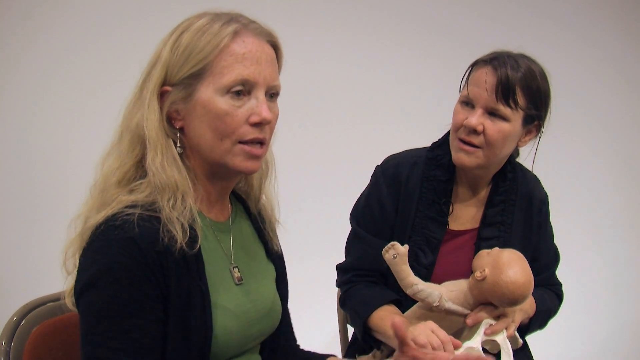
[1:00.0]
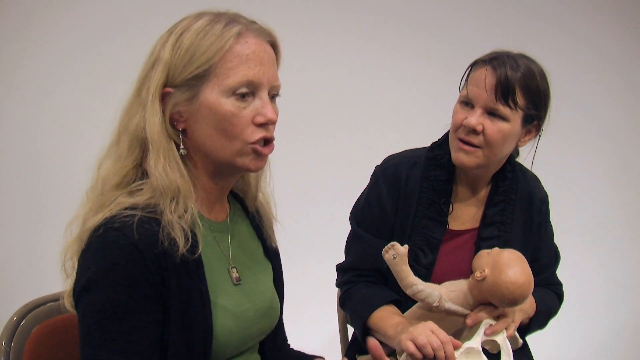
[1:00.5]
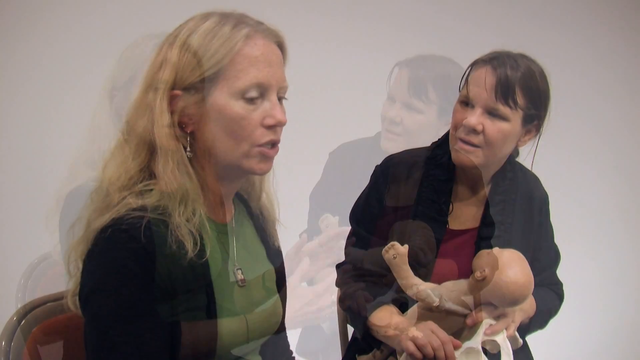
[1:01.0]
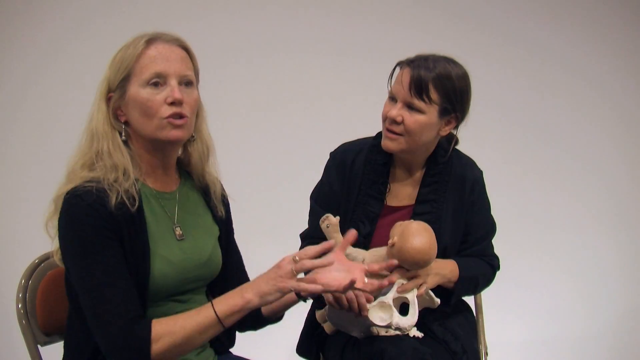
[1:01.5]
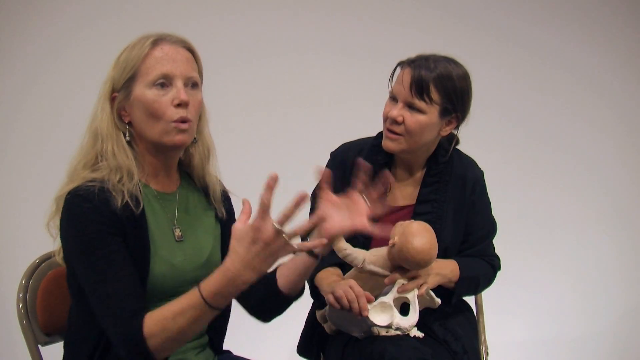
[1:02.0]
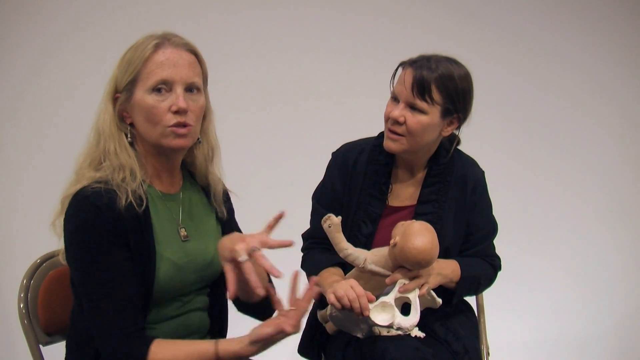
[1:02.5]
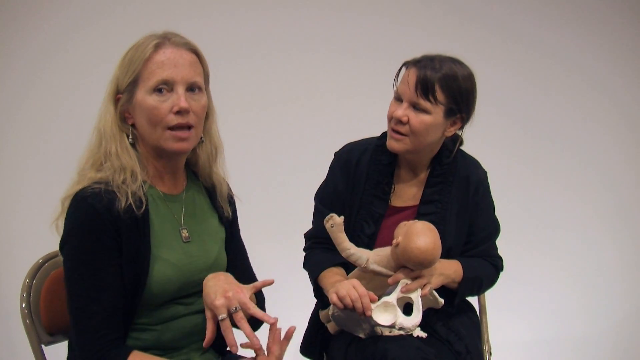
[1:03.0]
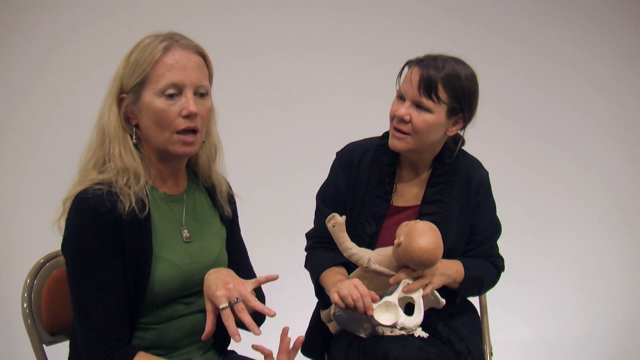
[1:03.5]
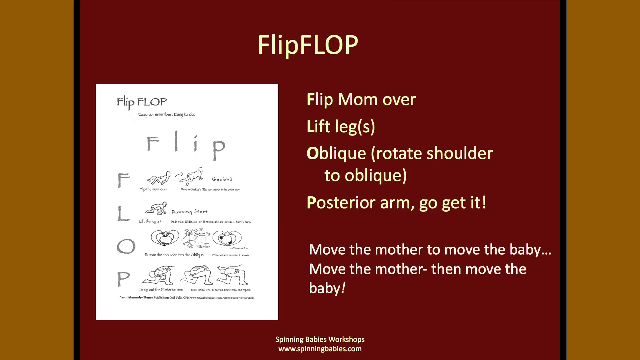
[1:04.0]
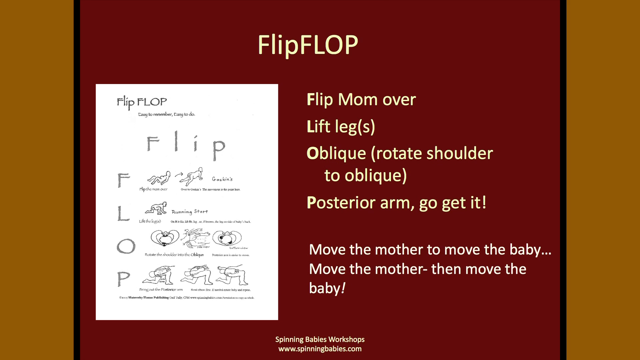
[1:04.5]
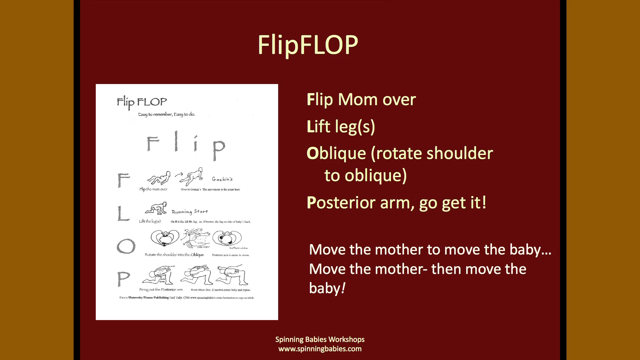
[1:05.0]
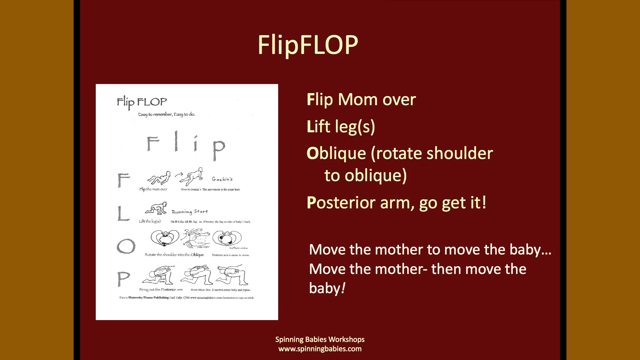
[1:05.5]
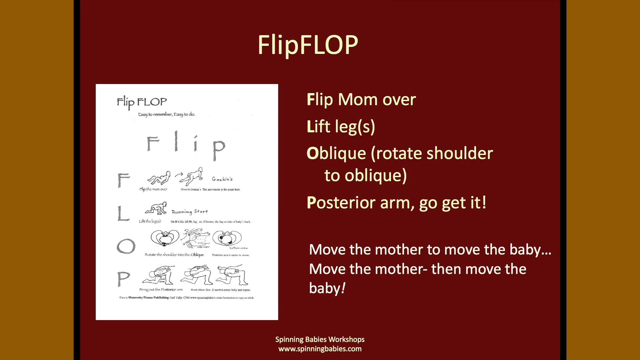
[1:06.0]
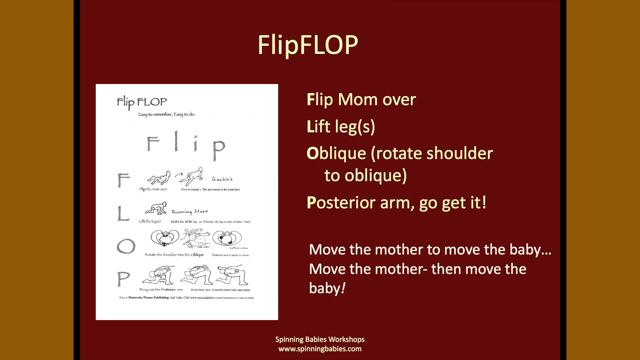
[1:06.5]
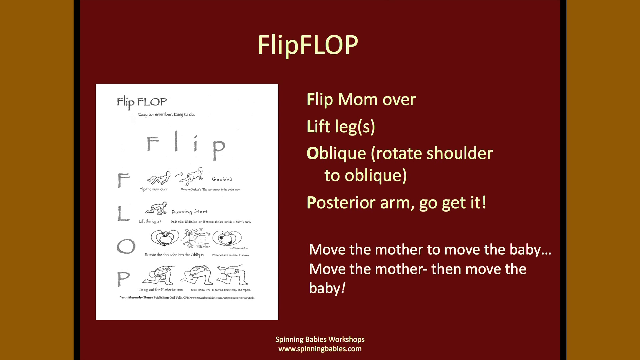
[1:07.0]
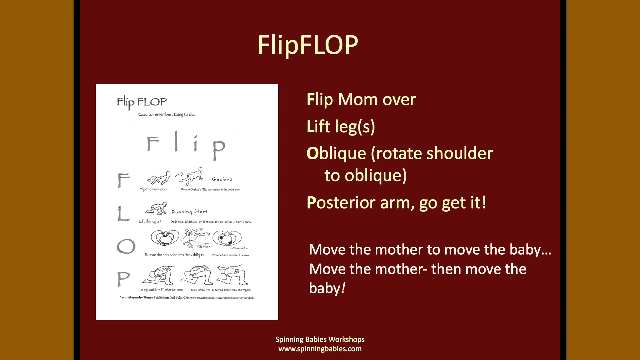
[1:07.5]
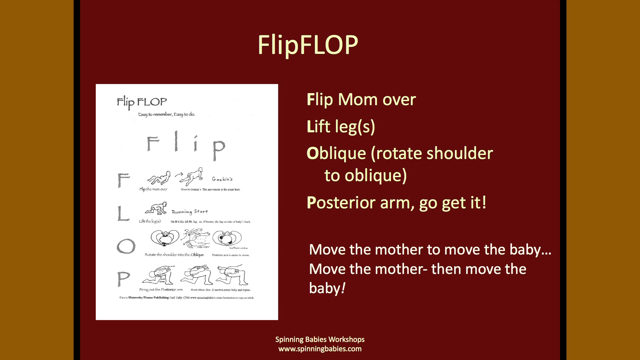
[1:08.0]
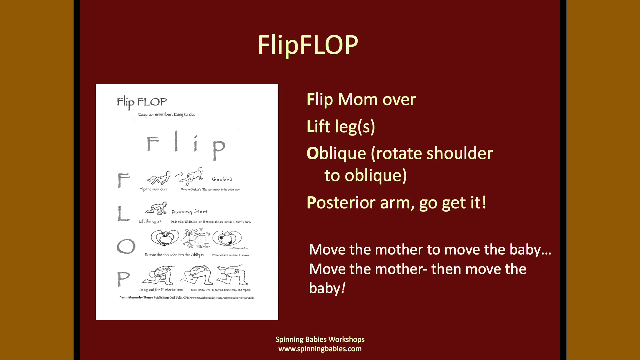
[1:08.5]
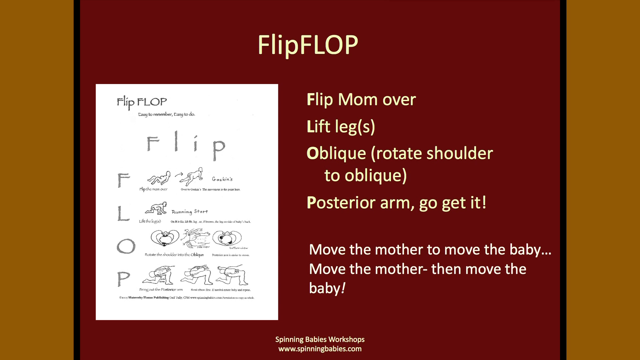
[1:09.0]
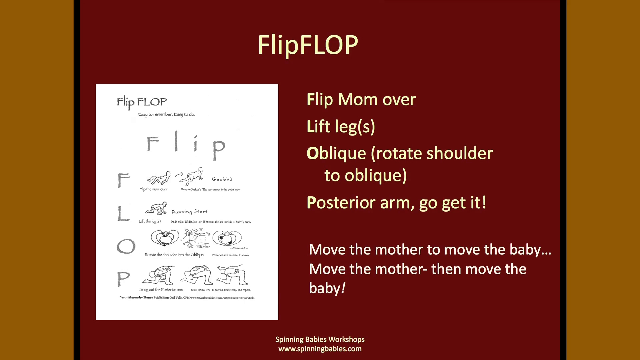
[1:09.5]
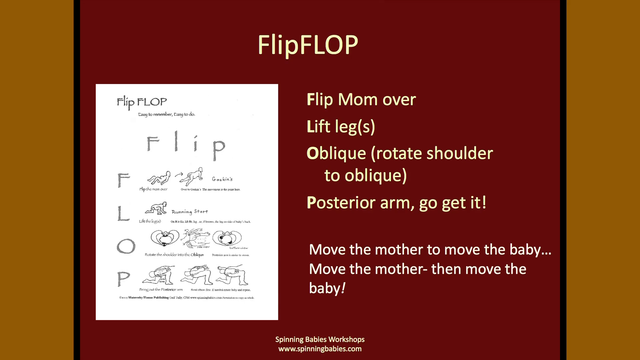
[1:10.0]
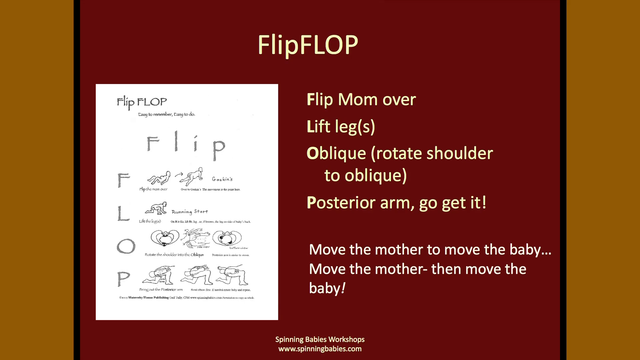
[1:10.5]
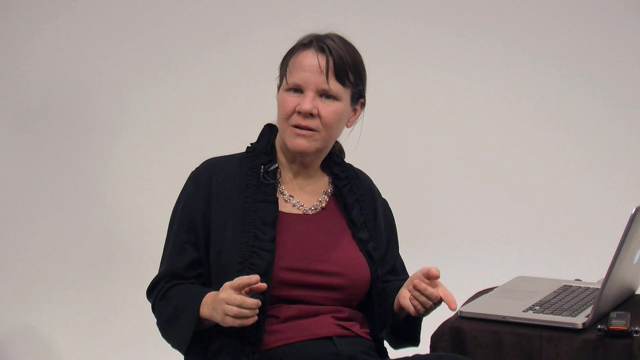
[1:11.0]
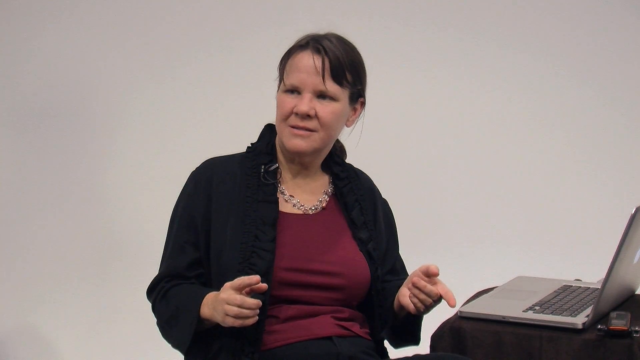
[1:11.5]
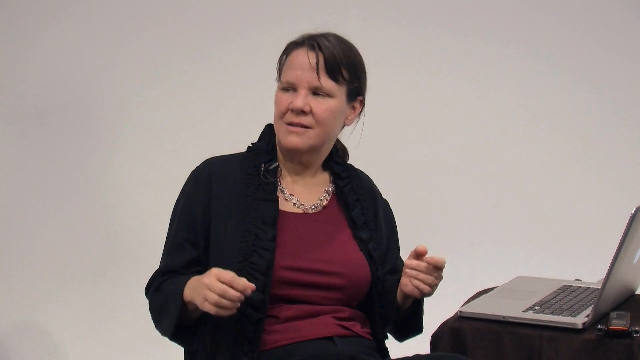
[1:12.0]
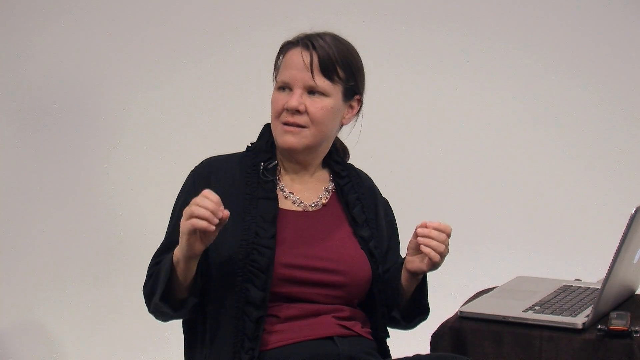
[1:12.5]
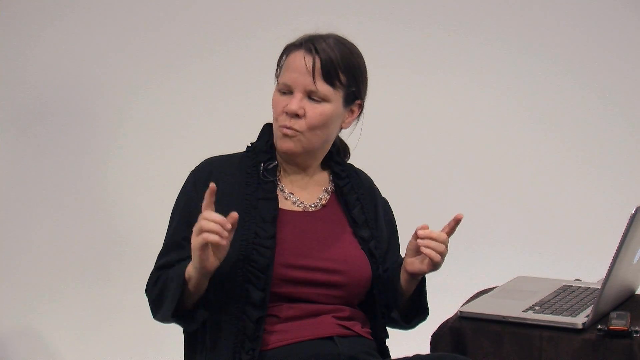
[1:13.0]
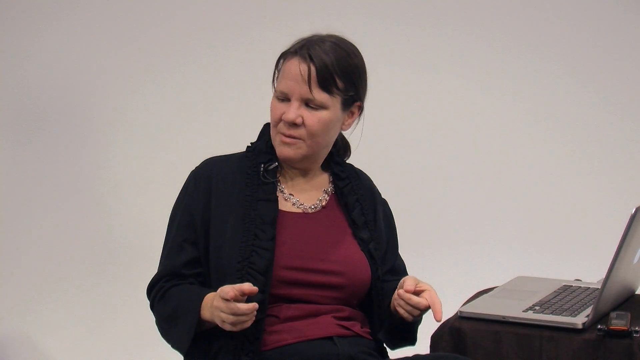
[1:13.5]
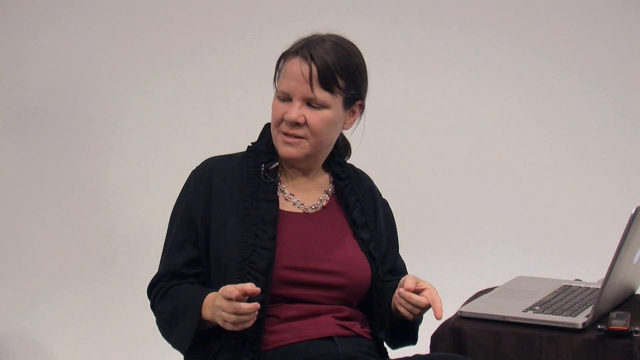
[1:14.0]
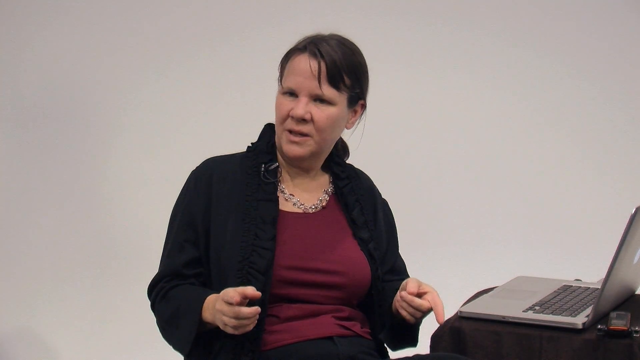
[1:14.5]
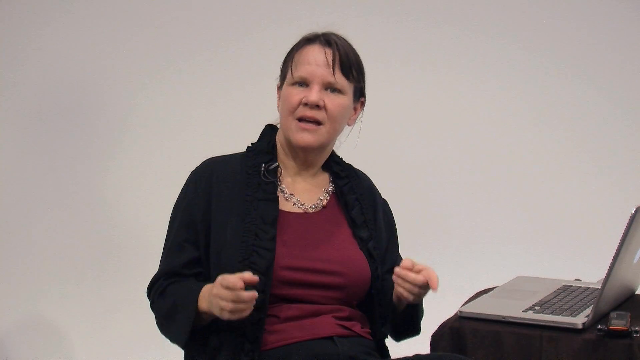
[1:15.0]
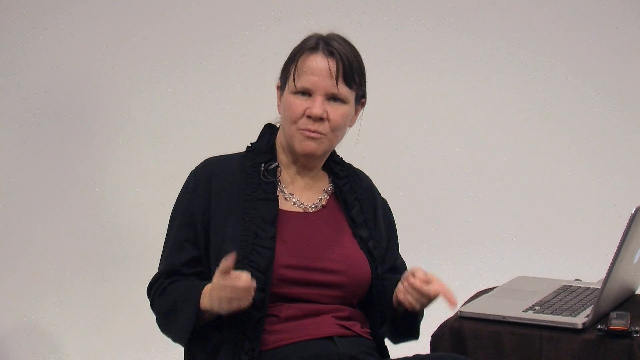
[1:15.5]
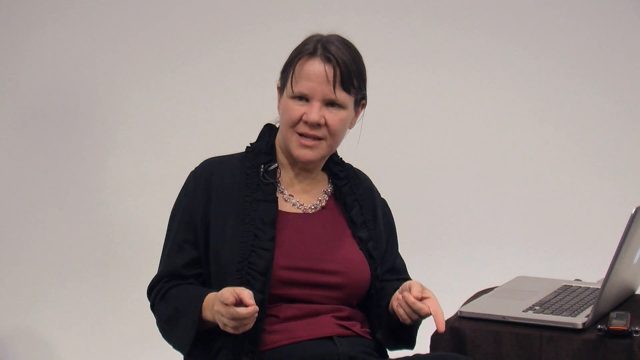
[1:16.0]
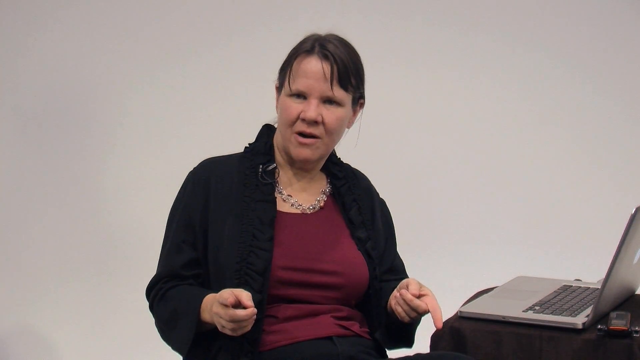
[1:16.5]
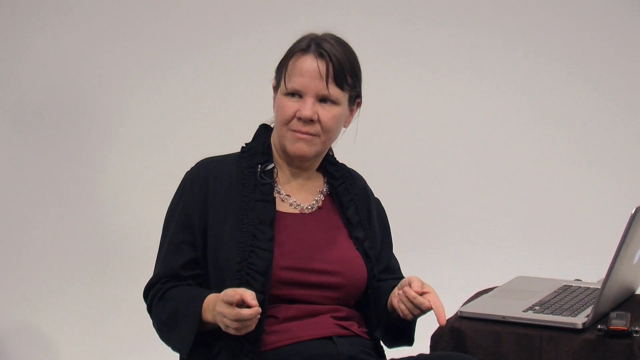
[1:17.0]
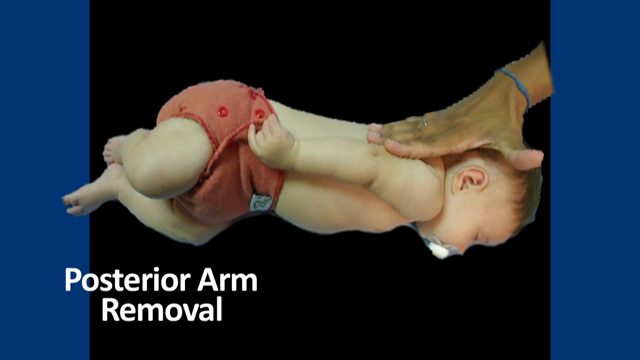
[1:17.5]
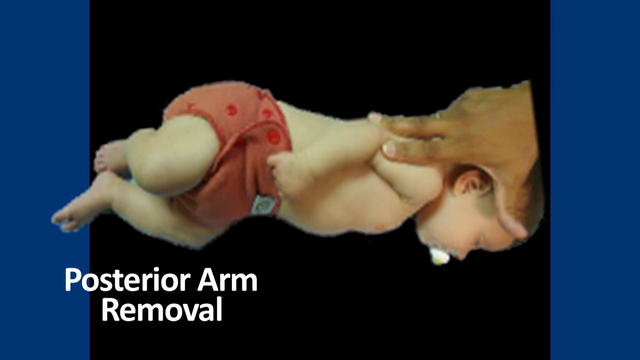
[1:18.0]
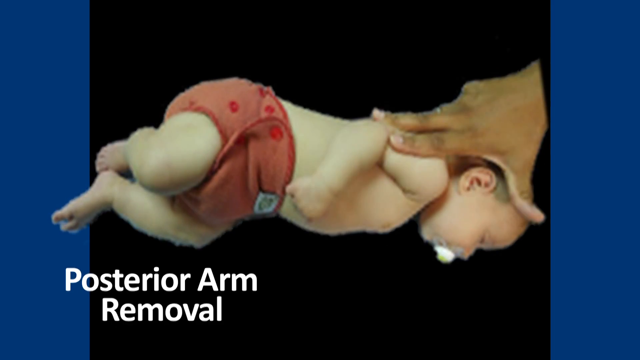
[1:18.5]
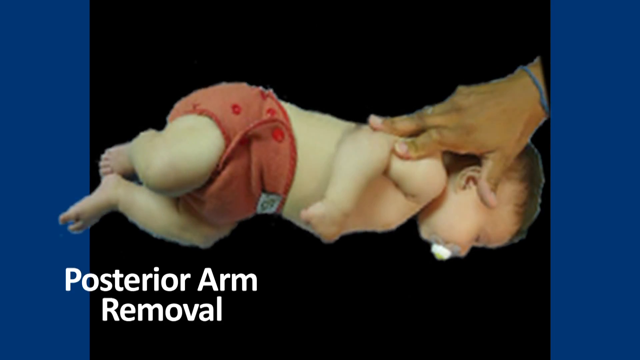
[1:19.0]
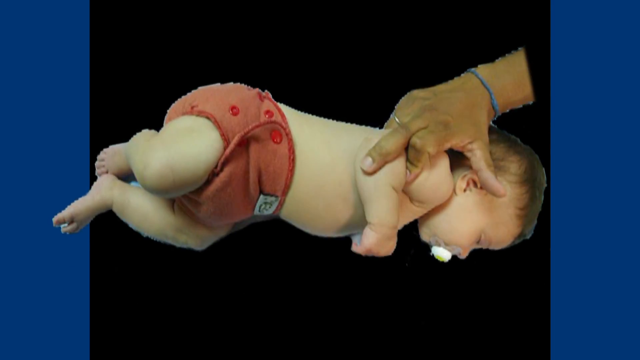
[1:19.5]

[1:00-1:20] The blonde-haired woman sitting next to Gail continues talking. She wears a green t-shirt and a black cardigan and uses her hands expressively as she speaks, at one point making a turning motion with her hands. Another slide appears, titled "Flip Flop", which reads "flip mum over, lift legs, oblique, rotate shoulder to oblique, posterior arm, go get it, move the mother to move the baby, move the mother then move the baby". Gail is then seen addressing the group before a baby appears on screen. The Caucasian baby is lying on its side, wearing an orange nappy/diaper, with a white dummy/pacifier in its mouth. A hand appears on screen as text identifies this as a demonstration of "Posterior Arm Removal".